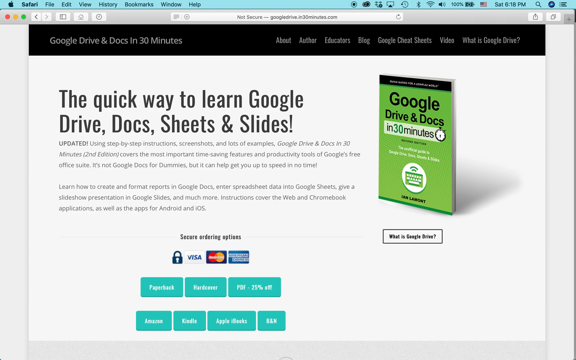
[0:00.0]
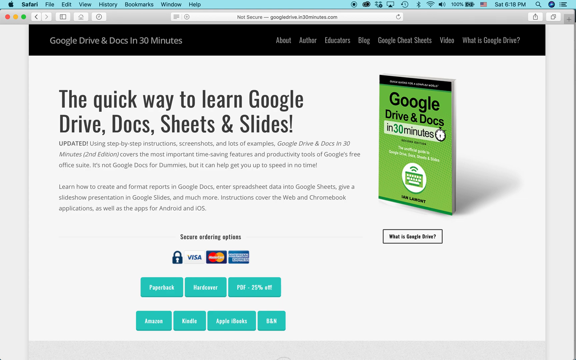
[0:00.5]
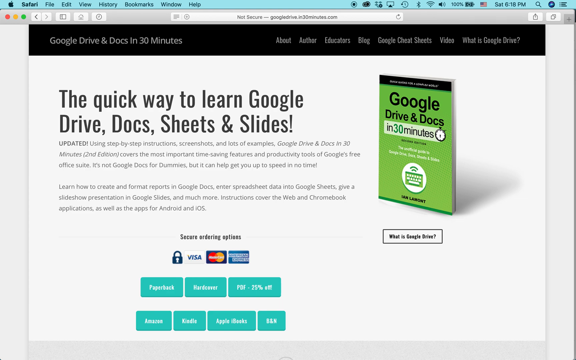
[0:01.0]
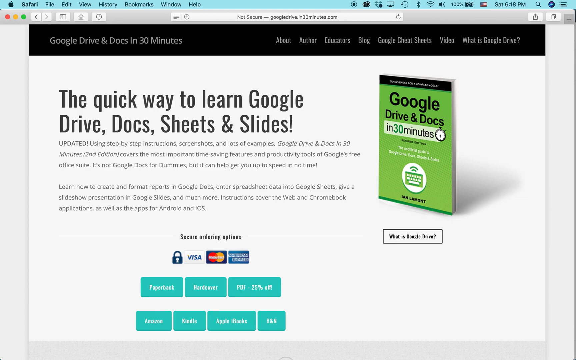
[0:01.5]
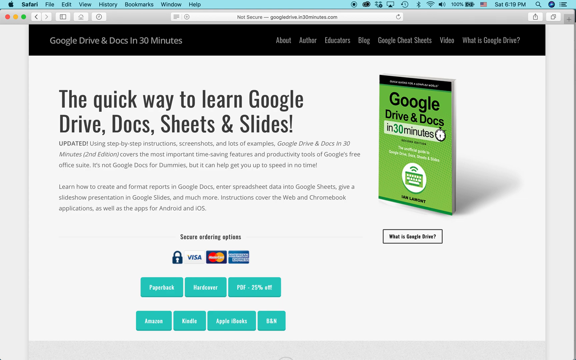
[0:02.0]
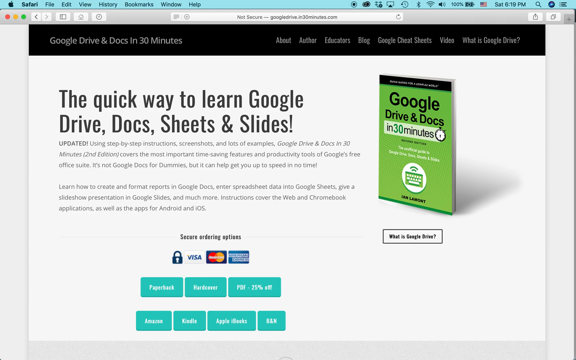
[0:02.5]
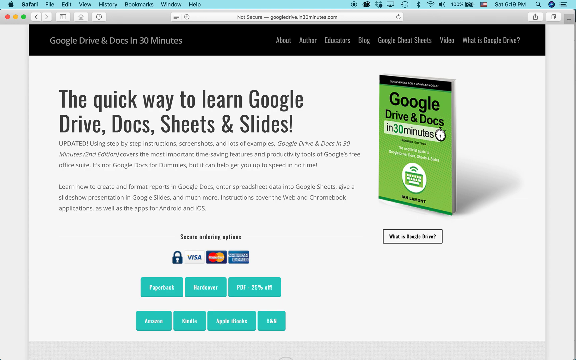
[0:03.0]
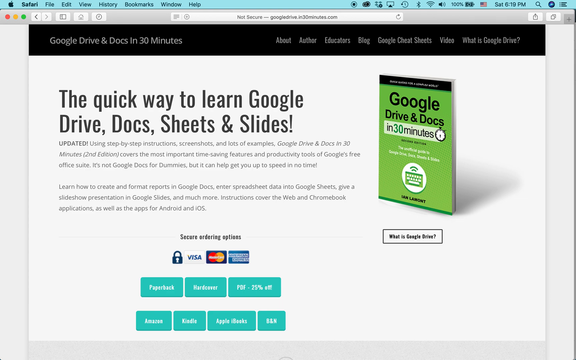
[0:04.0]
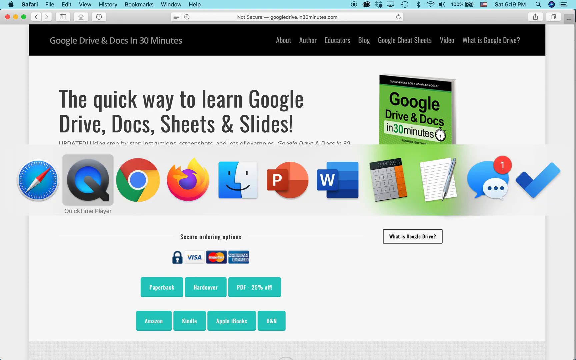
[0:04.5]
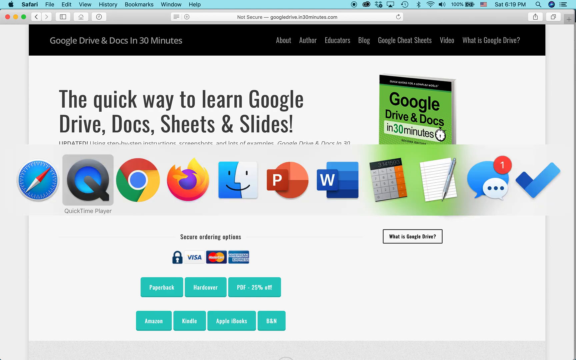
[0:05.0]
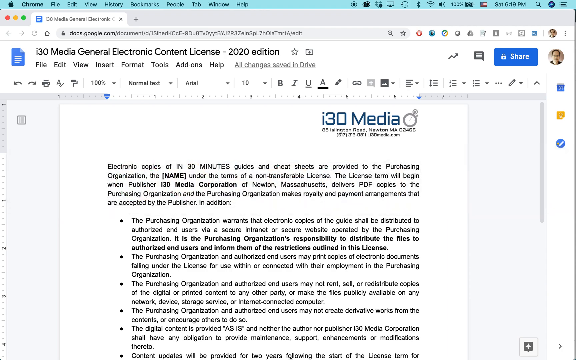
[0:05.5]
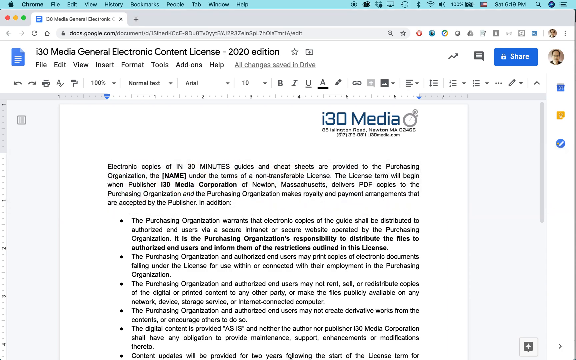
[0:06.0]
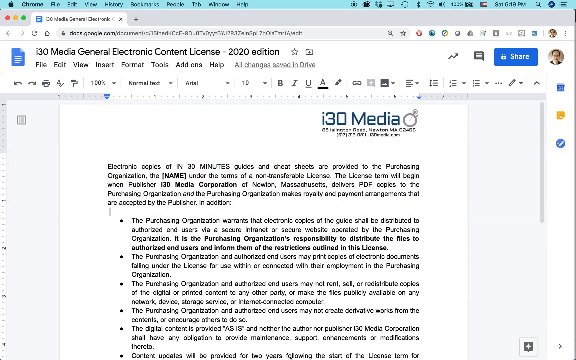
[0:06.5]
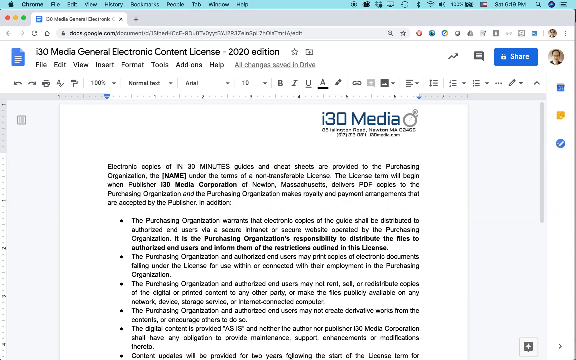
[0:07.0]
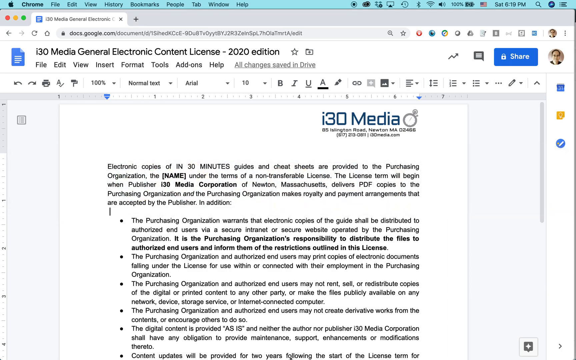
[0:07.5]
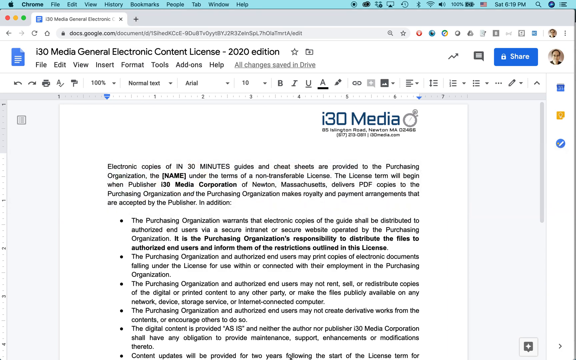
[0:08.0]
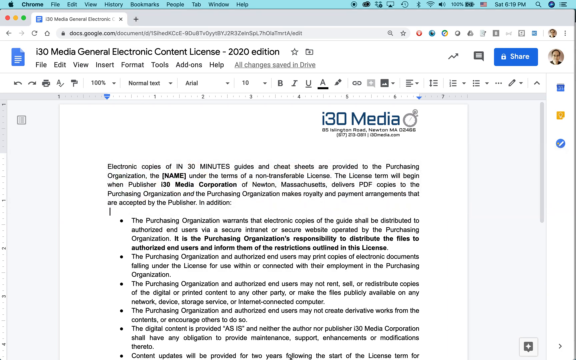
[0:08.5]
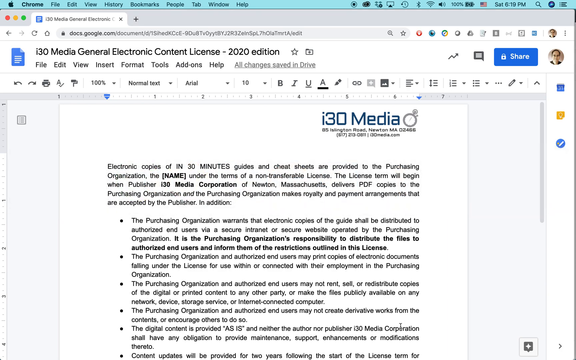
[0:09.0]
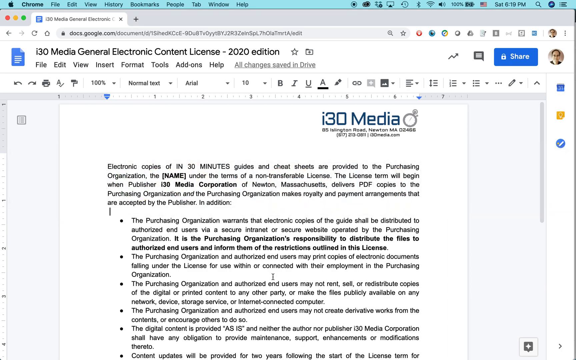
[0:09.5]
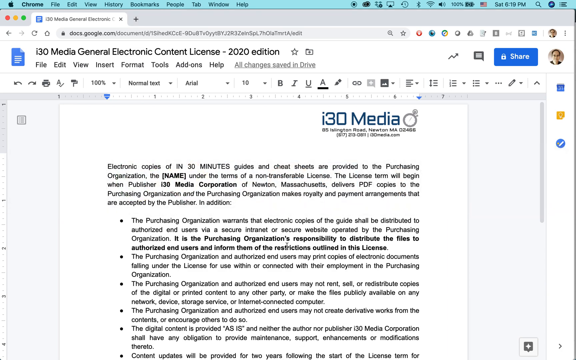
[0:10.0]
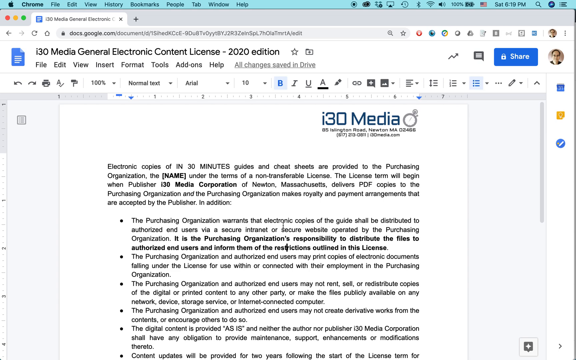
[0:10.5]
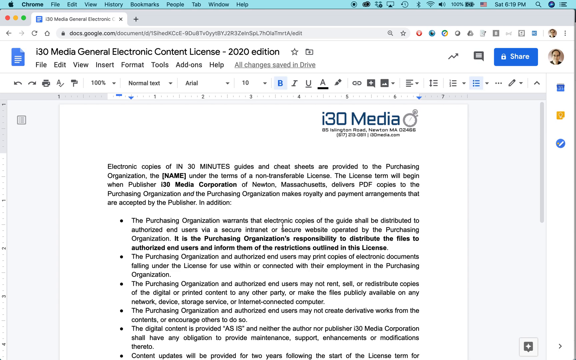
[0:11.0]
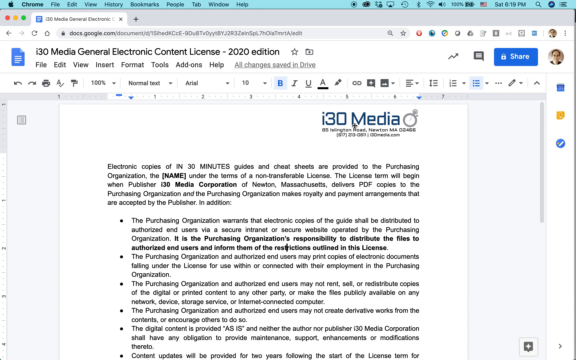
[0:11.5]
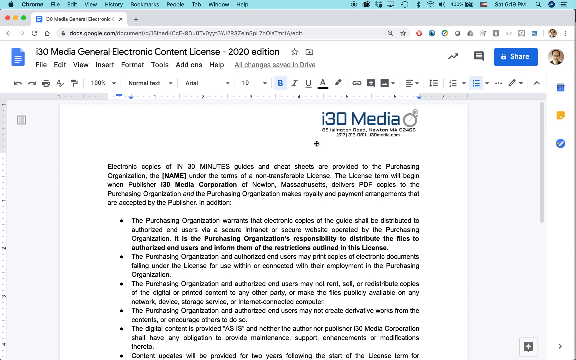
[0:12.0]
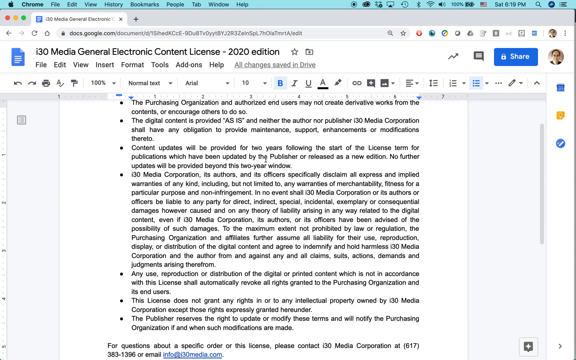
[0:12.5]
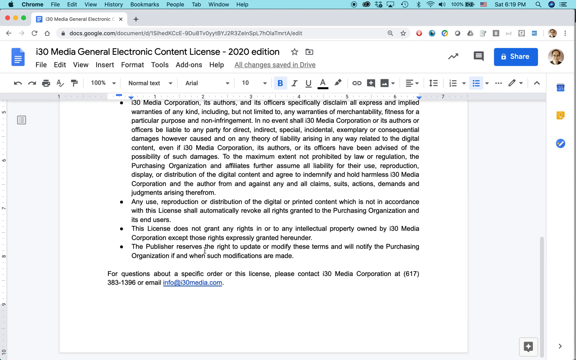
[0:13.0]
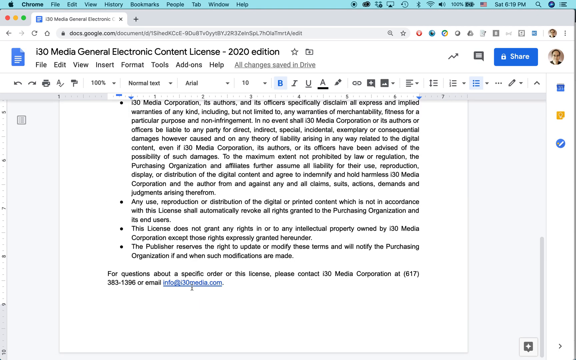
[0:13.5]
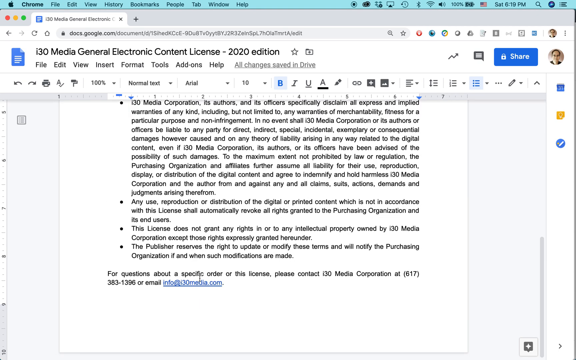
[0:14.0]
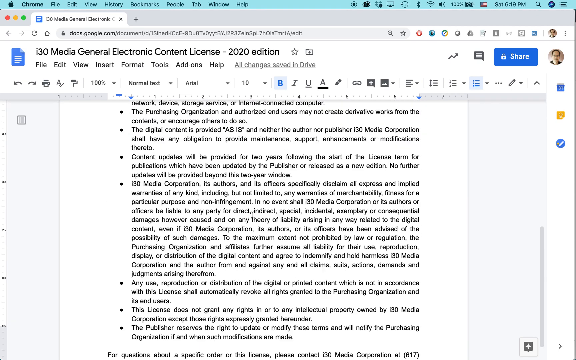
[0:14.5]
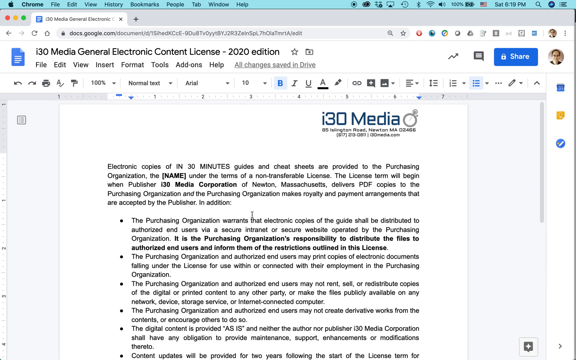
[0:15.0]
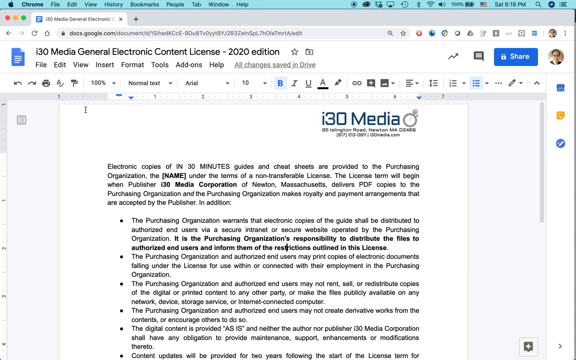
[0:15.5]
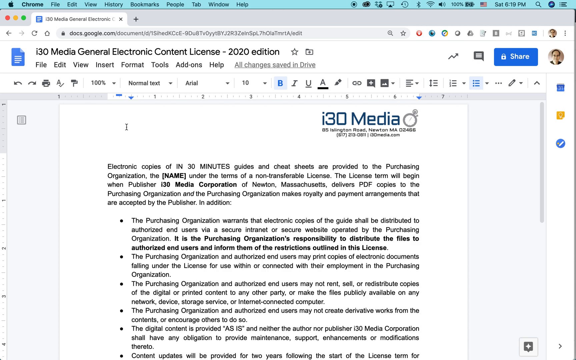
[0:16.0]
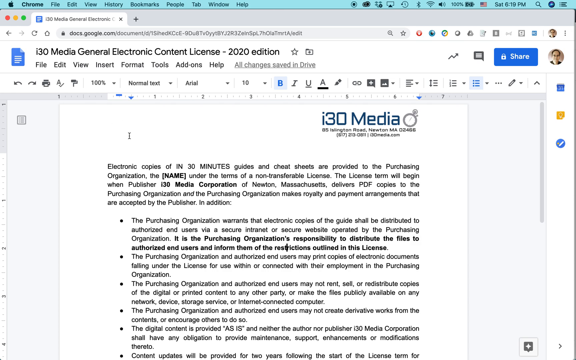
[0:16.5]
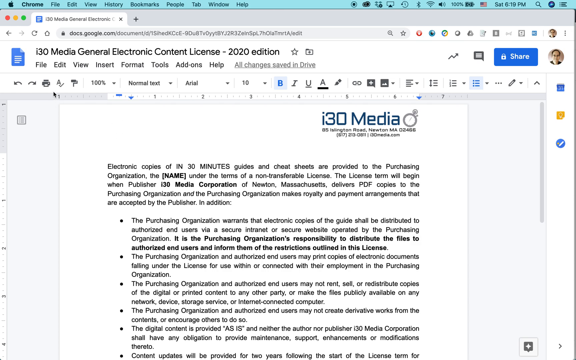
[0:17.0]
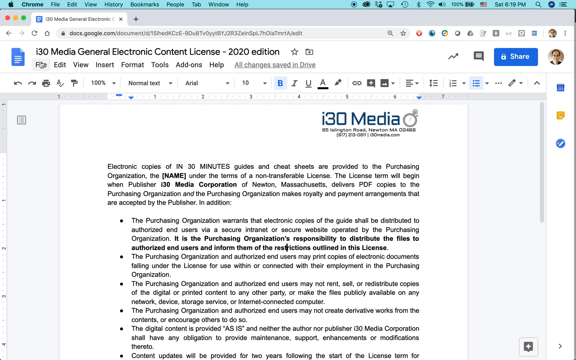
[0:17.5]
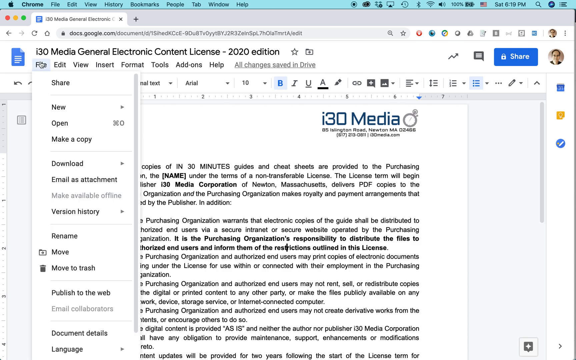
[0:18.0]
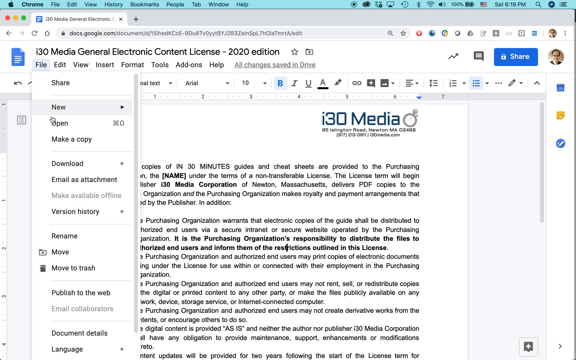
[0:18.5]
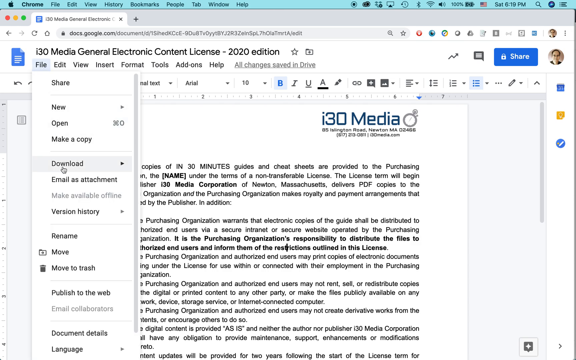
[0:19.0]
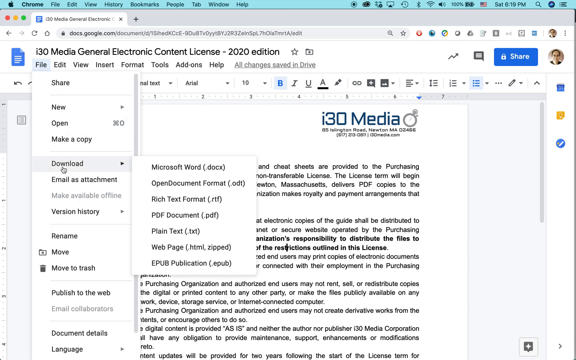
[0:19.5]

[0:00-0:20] On a Mac operating system, a tutorial-style page presents the quickest way to learn Google Drive Docs, Sheets, and Slides, titled Google Drive and Docs in 30 minutes, and it seems to offer this Google Drive course for purchase. The screen then transitions to a Google Doc page that says "130 media general electronic contents license 2020 edition". The view scrolls down through the contents of the document, and the cursor hovers over the document as it is downloaded, or is about to be downloaded. No humans or animals appear.